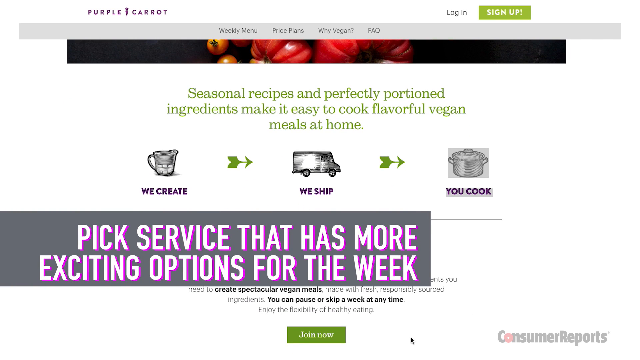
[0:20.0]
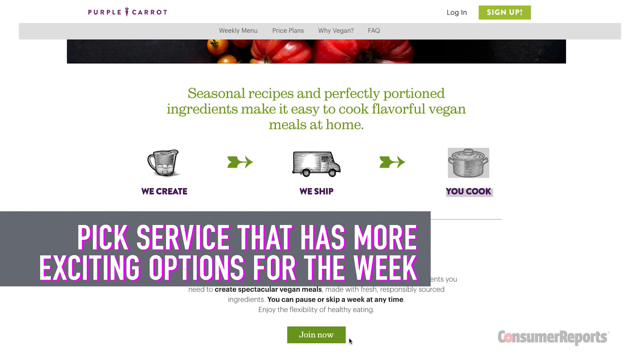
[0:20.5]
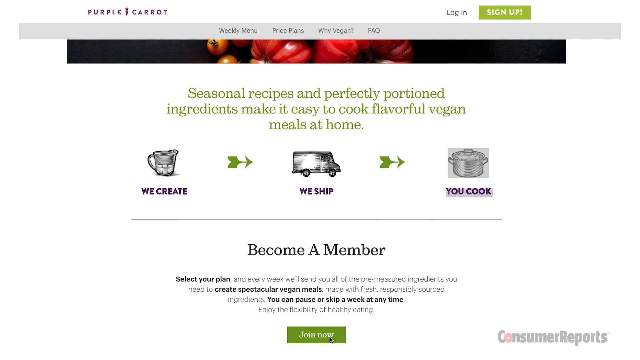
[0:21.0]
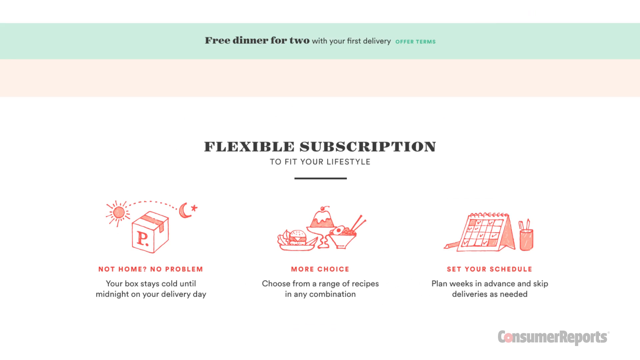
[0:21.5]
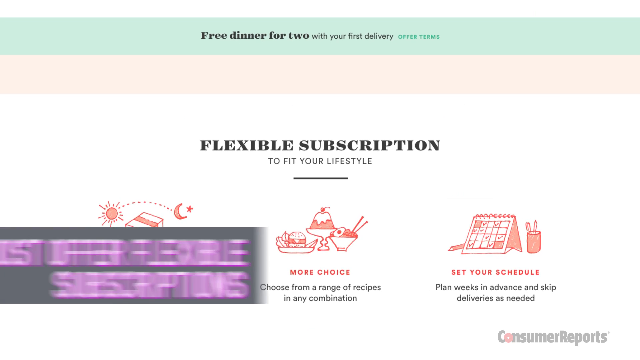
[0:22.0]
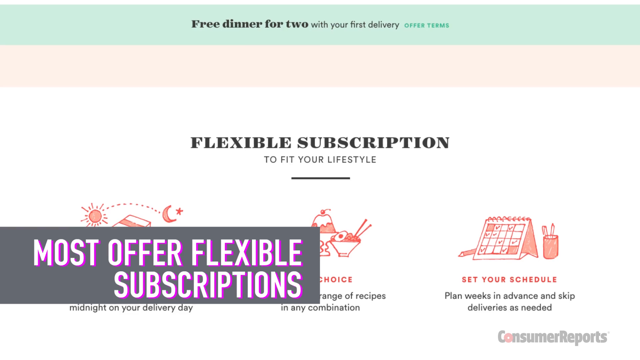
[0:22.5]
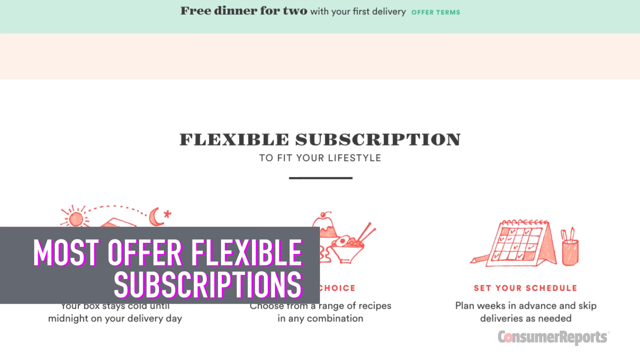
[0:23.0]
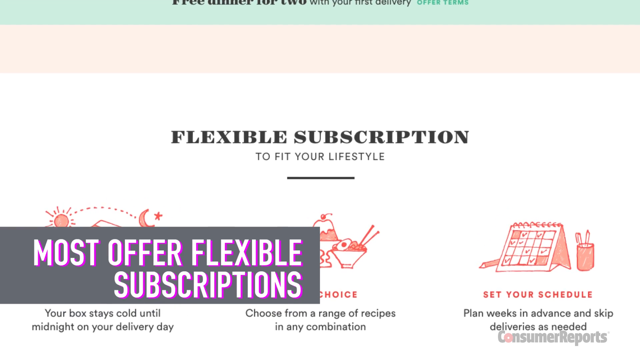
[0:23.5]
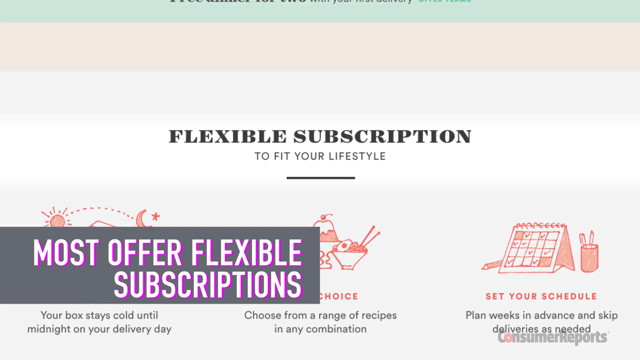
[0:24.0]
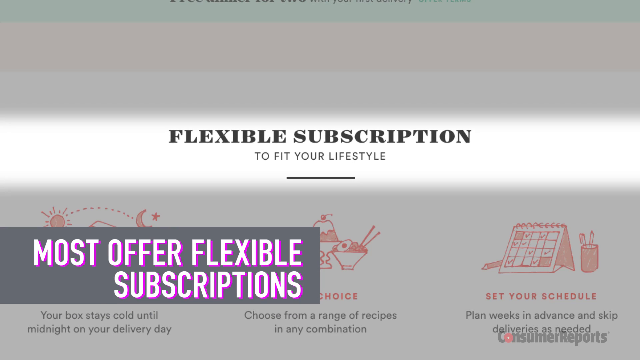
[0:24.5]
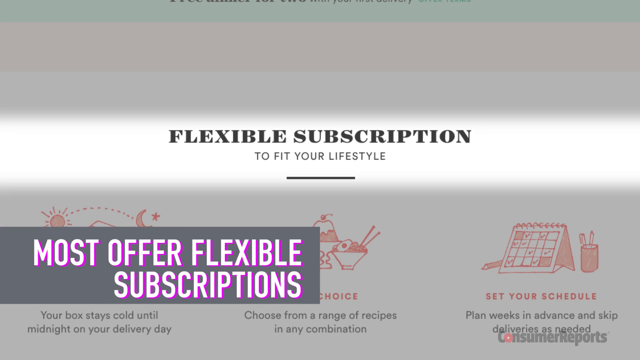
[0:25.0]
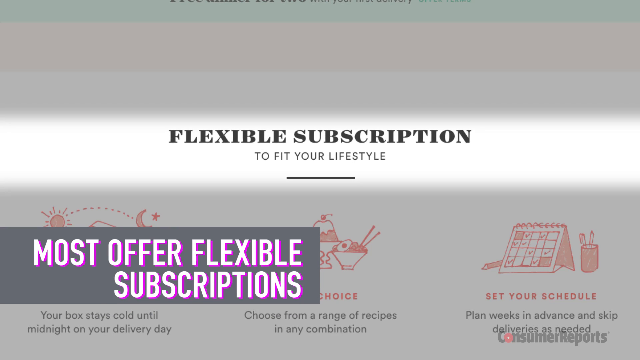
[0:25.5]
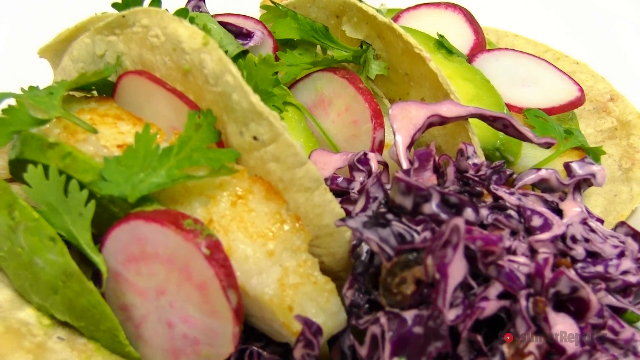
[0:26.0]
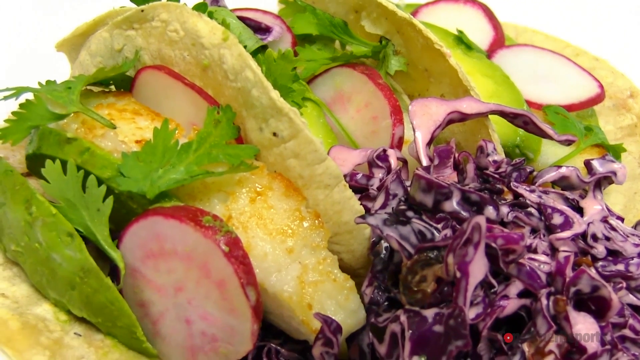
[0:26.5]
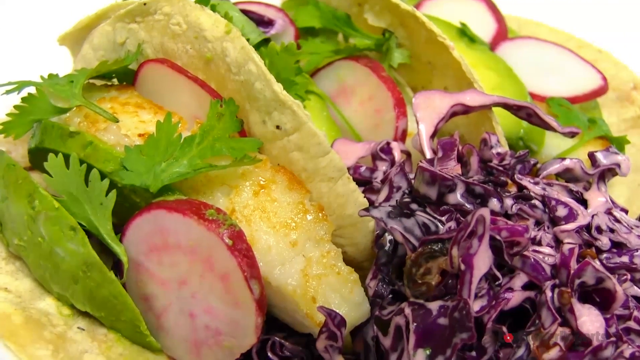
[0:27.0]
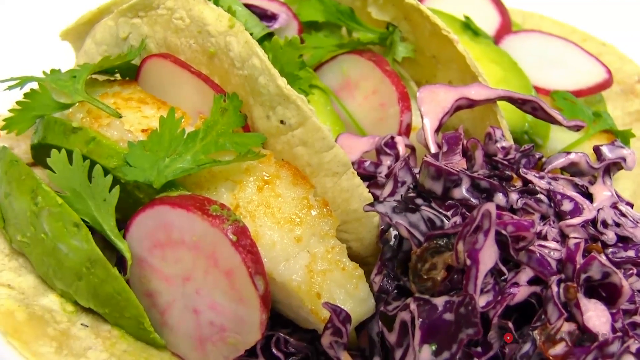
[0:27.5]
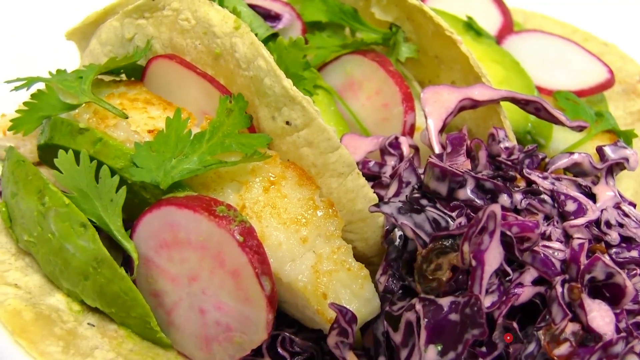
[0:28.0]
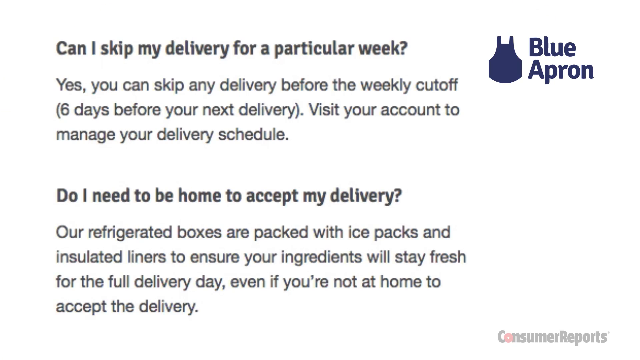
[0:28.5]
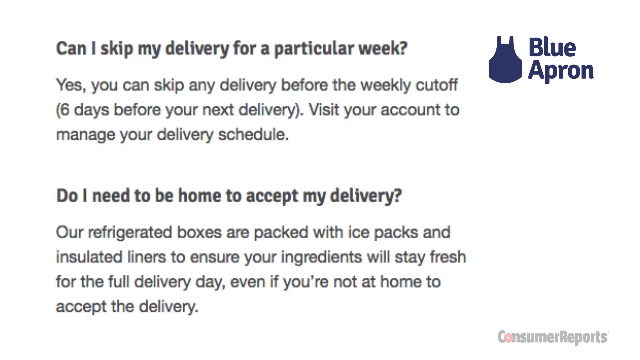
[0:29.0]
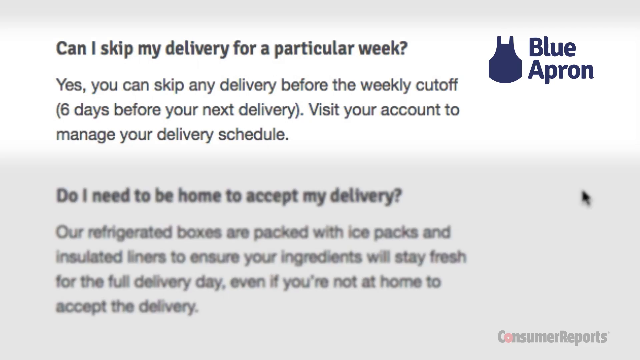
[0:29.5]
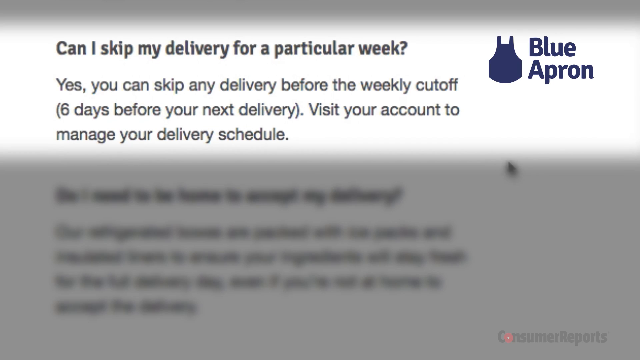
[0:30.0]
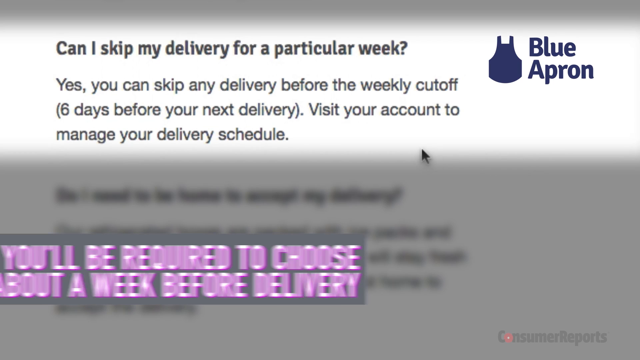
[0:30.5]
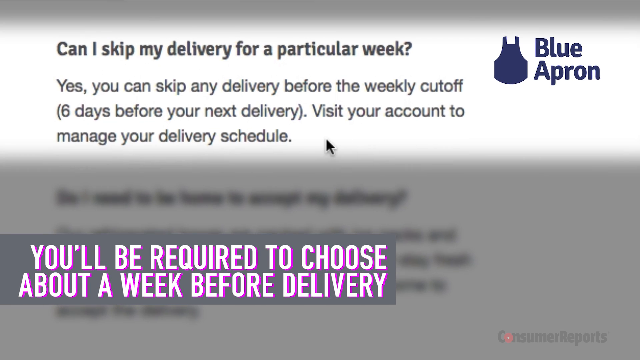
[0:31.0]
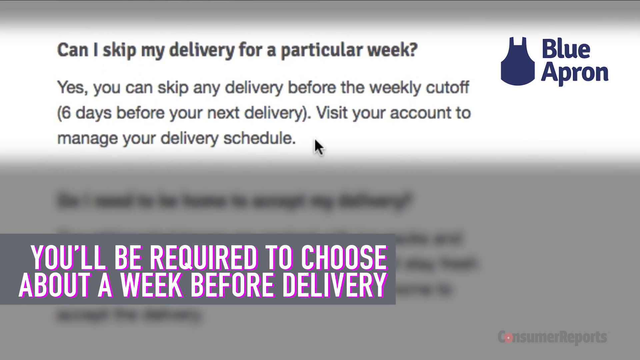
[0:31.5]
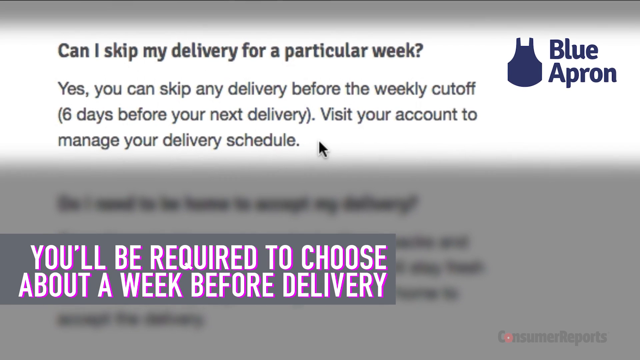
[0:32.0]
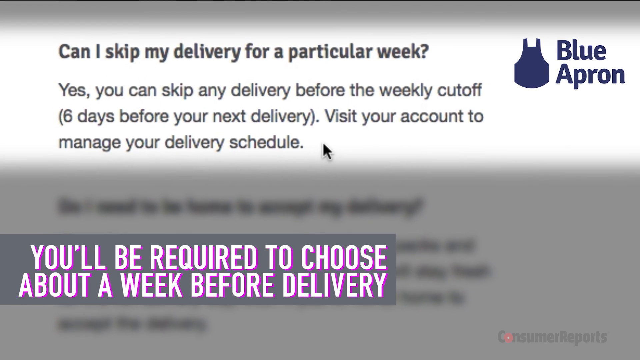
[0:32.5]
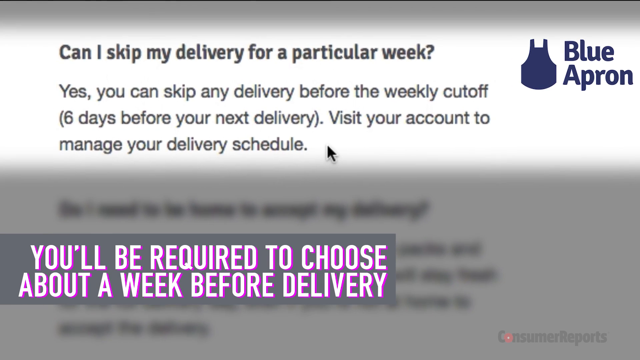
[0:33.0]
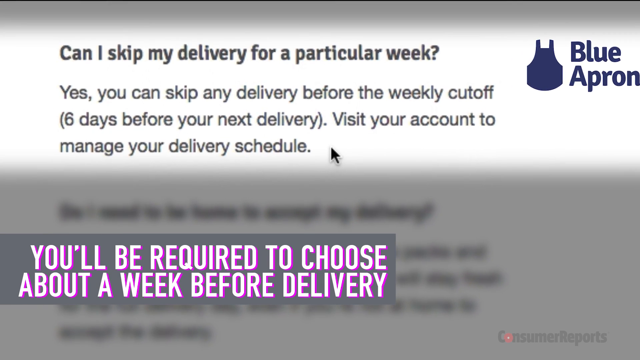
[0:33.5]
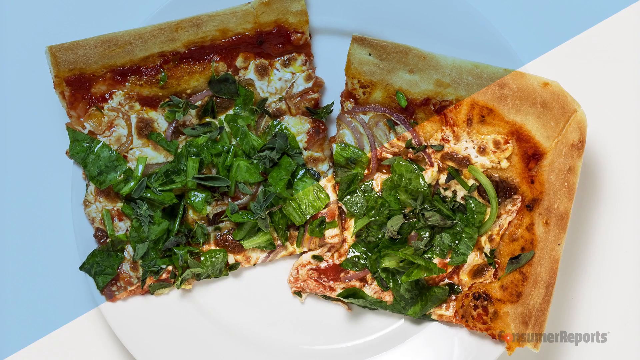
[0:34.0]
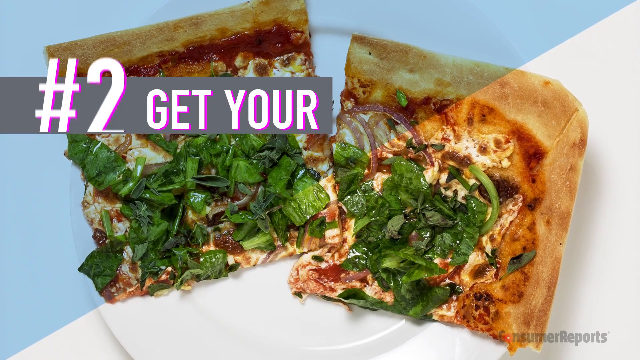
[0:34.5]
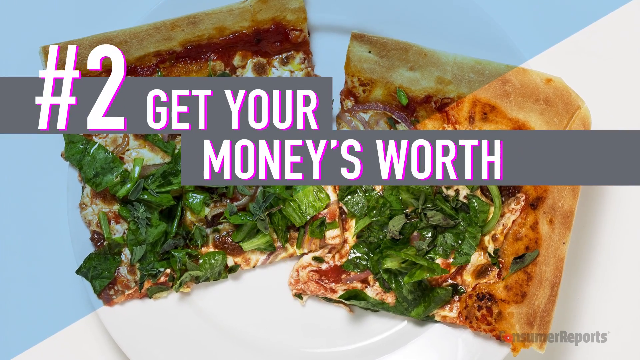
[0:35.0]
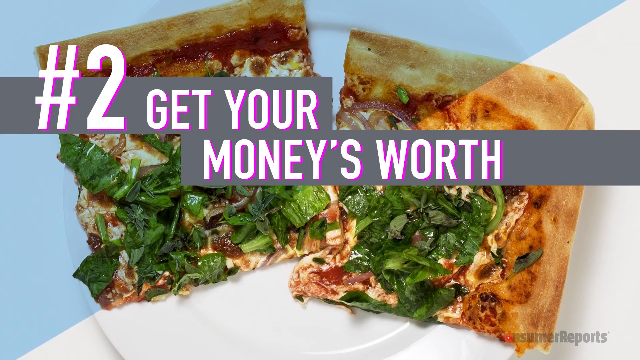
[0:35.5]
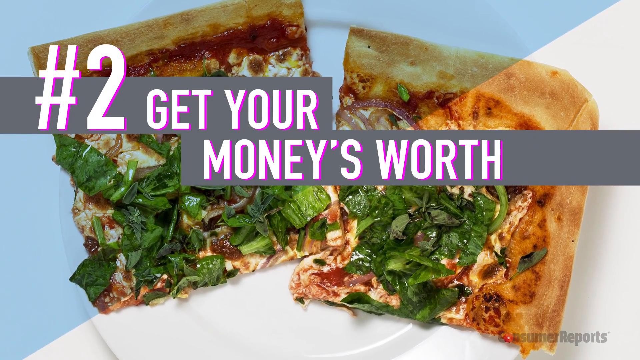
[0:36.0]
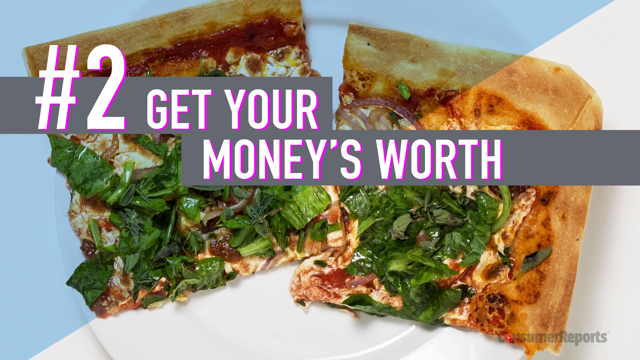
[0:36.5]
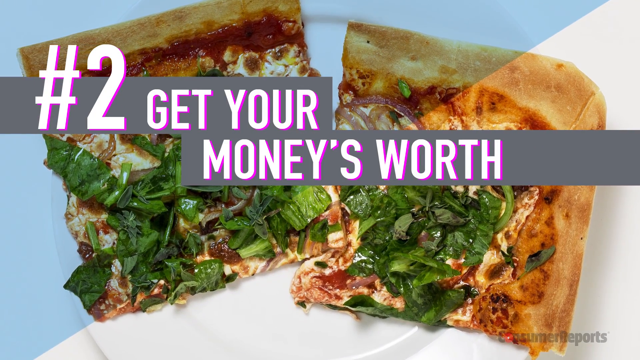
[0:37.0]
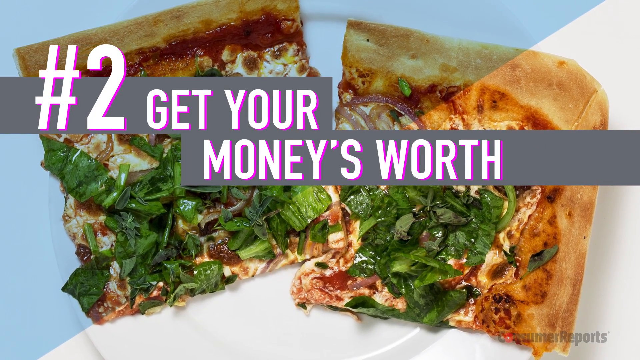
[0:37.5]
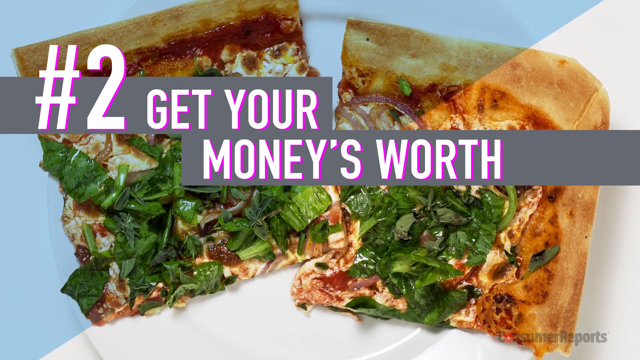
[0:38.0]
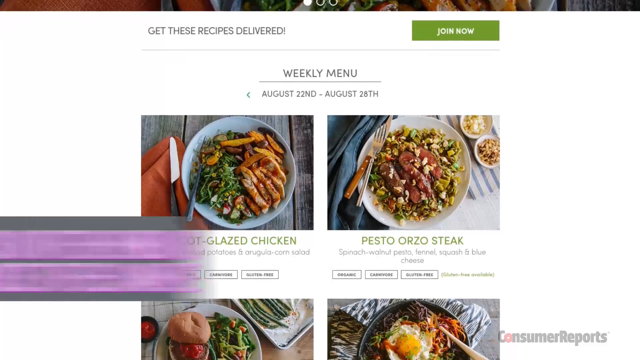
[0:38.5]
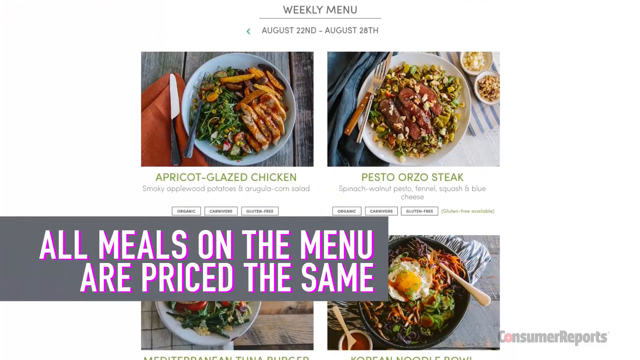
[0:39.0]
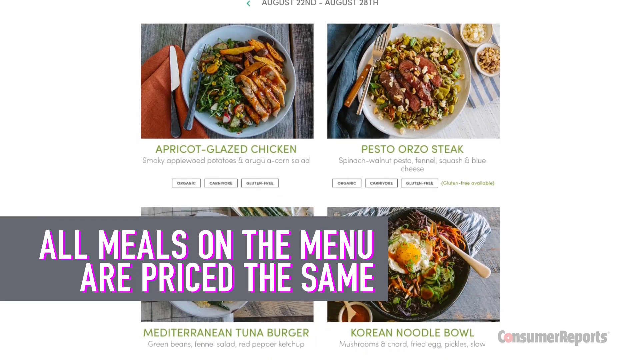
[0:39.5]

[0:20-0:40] A web page is shown. In the top left-hand corner, "purple caret" appears in purple writing, with a little caret between "purple" and "caret". To the right are a Log In tab and a green Sign Up tab. Below them is a row of tabs, from left to right: "weekly menus", "price plans", "why vegan" and "FAQ". Beneath that, larger green letters read "seasonal recipes and perfectly portioned ingredients make it easy to cook flavorful vegan meals at home". A measuring cup appears with the words "we create", a van with "we ship", and to the right "you cook" with a pot.